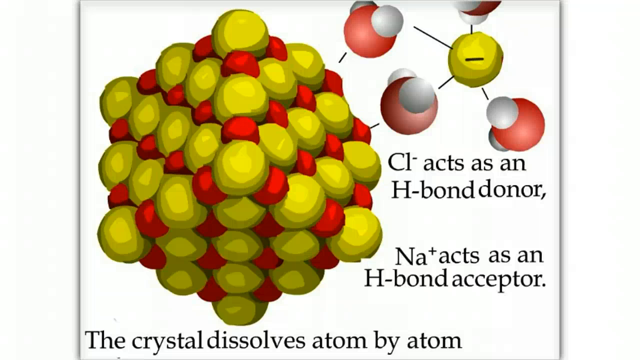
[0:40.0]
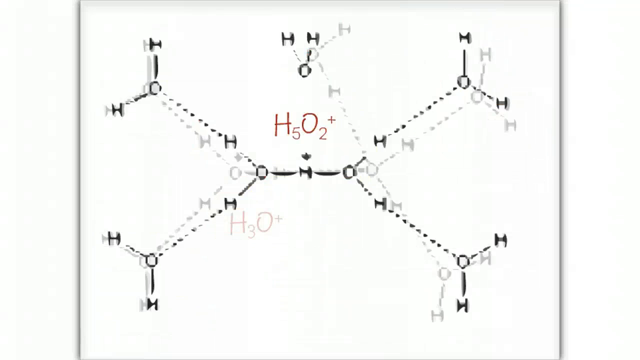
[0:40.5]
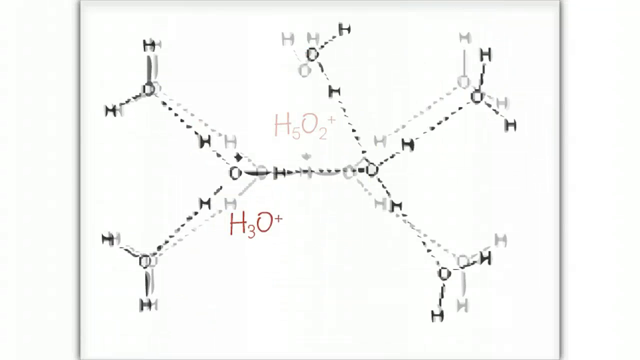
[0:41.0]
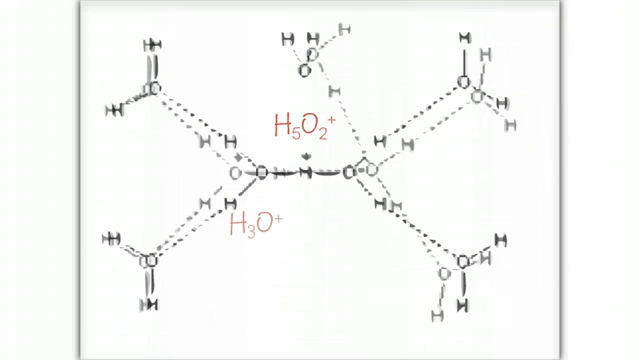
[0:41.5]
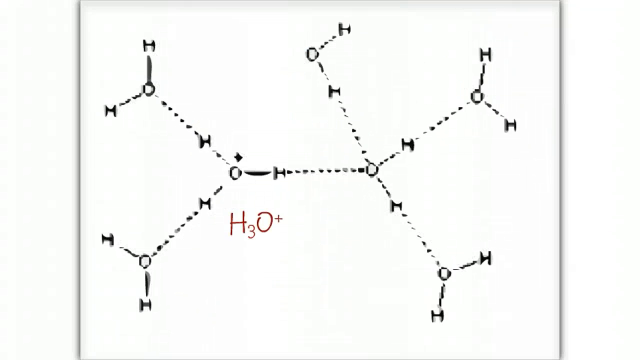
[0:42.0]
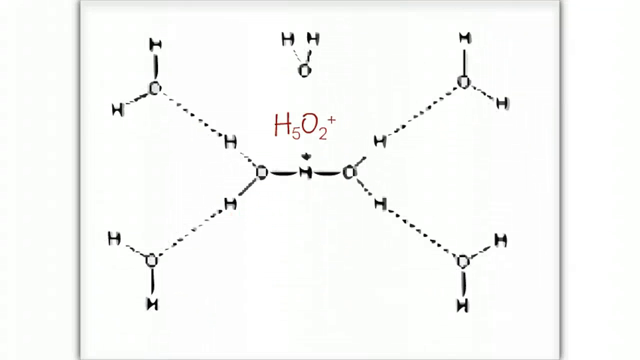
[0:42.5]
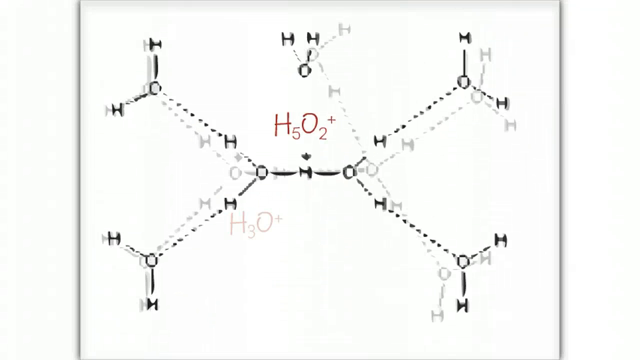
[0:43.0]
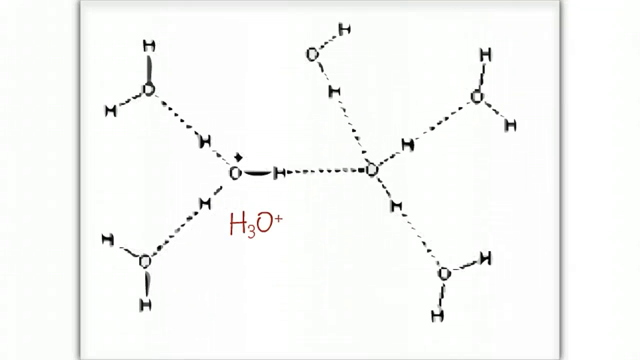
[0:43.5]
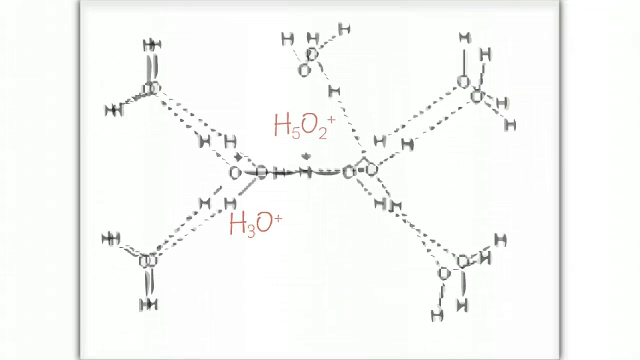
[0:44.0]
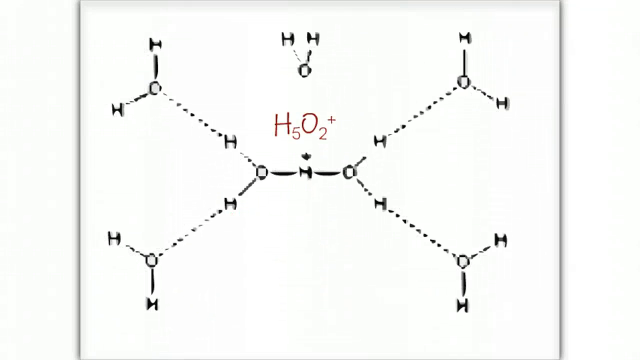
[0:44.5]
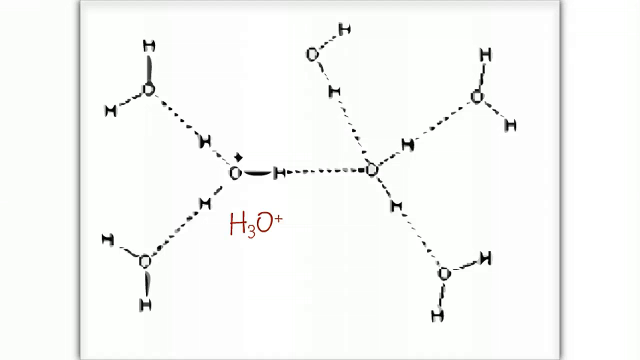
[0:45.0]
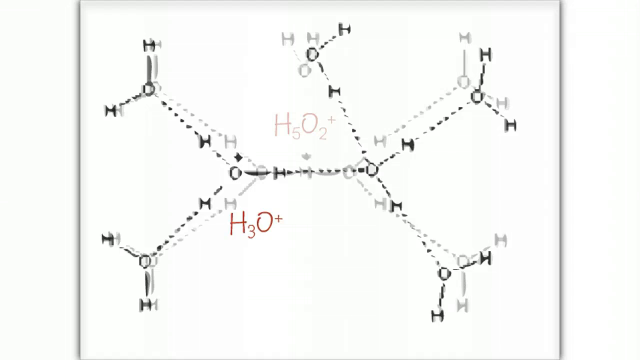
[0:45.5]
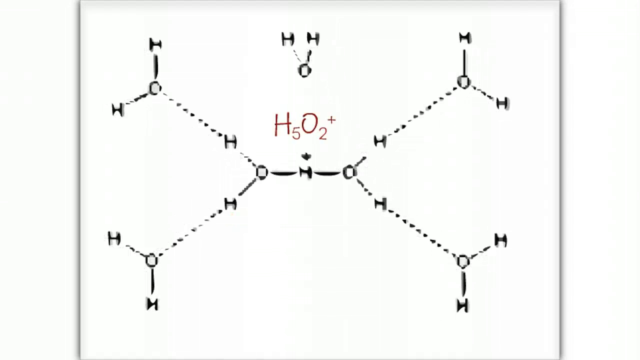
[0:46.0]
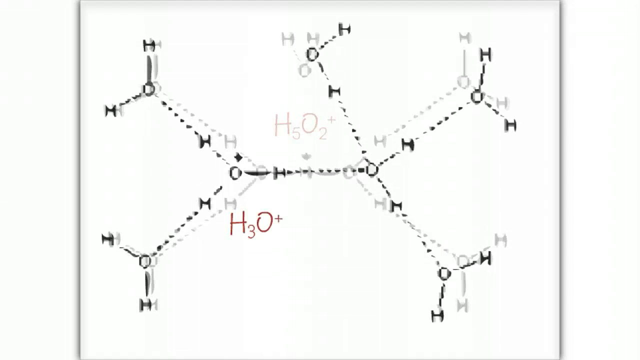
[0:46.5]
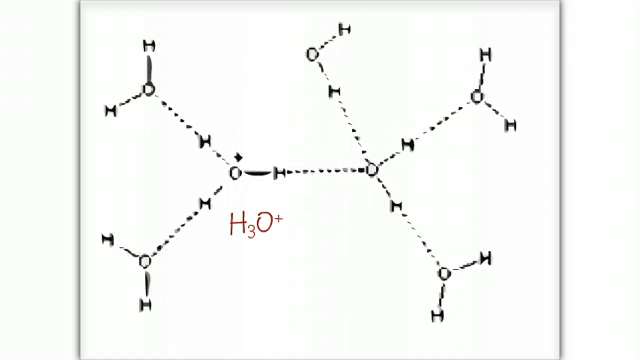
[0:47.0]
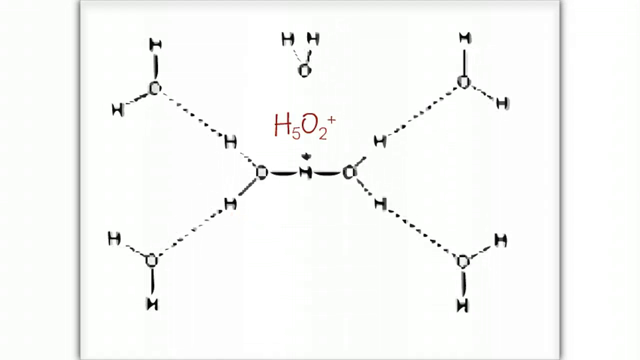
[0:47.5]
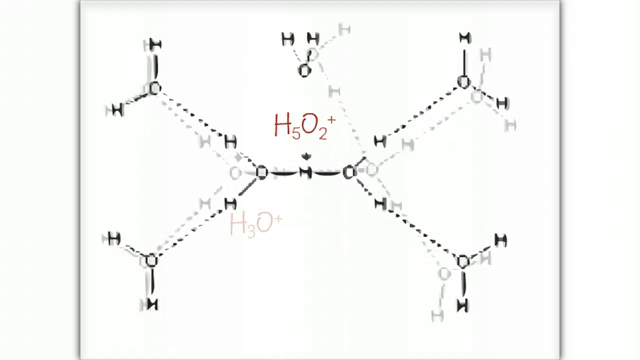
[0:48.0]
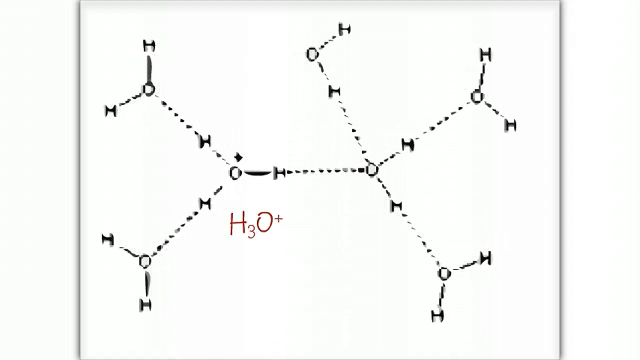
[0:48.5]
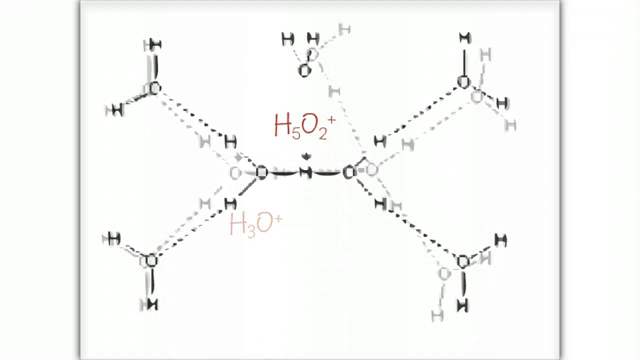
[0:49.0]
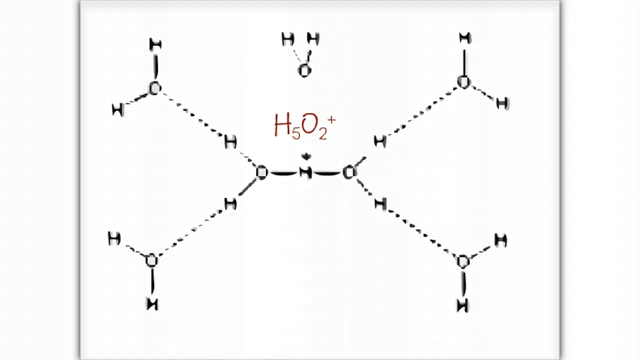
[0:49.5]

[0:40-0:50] The screen continues with different bond diagrams made of letters, lines and dotted lines. The bond diagrams for H5O2 plus and H3O plus cycle back and forth multiple times, showing the differences between the two. The diagrams are drawn in black pen, and the name of each compound is written in purple pen or marker. The diagrams are clearly hand-drawn, judging by the imperfect letters, the dotted lines, and the variation in thickness and shading. The white borders remain visible on the left and right sides of the screen.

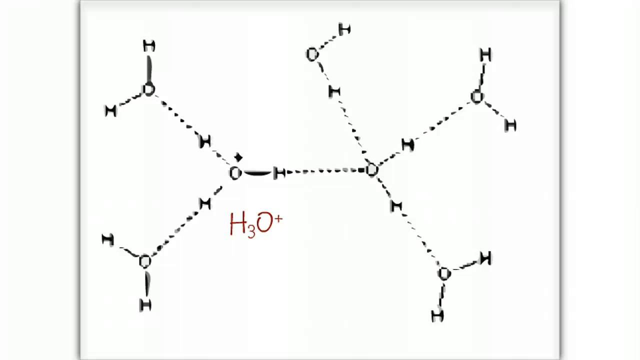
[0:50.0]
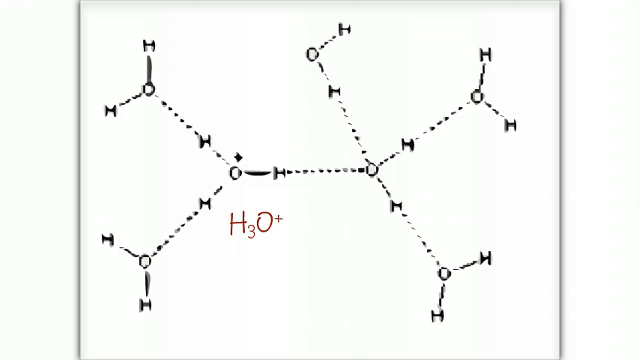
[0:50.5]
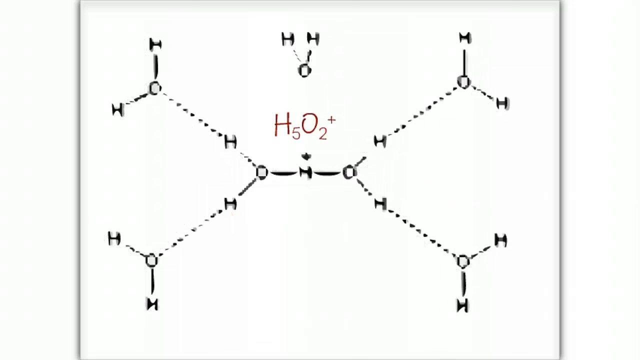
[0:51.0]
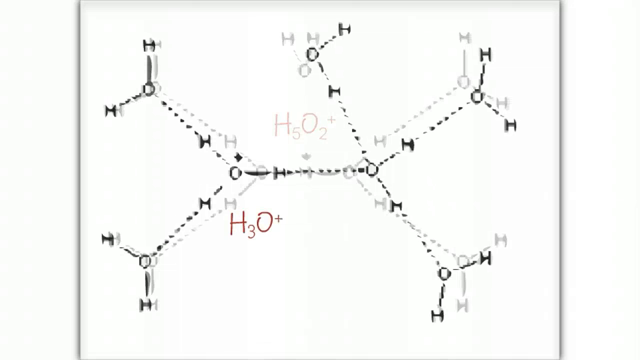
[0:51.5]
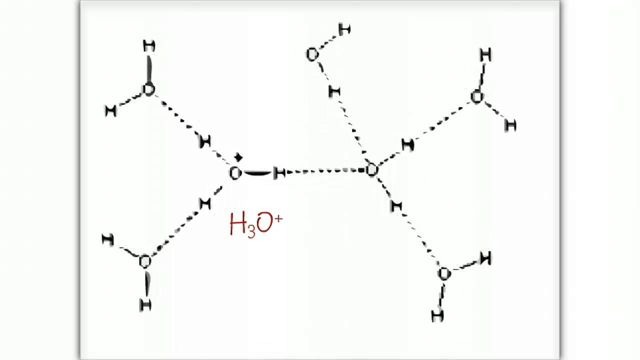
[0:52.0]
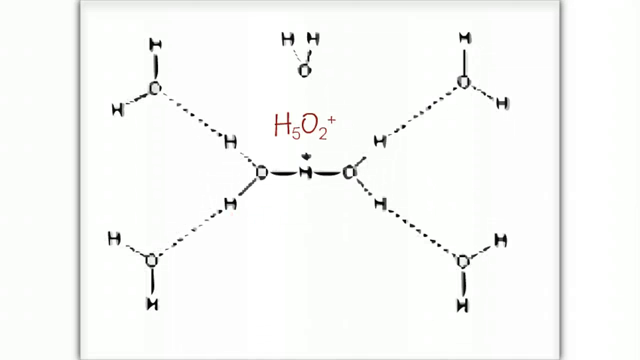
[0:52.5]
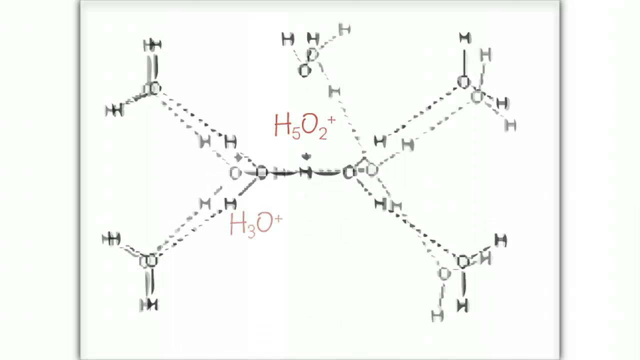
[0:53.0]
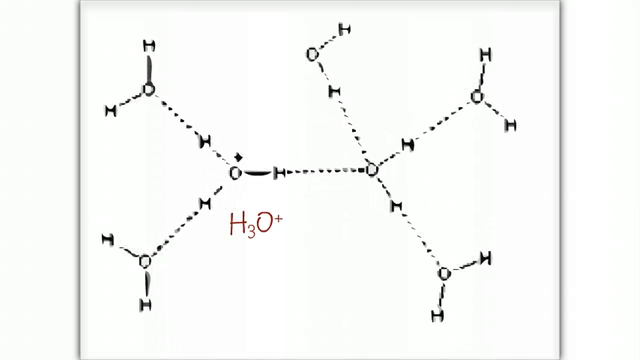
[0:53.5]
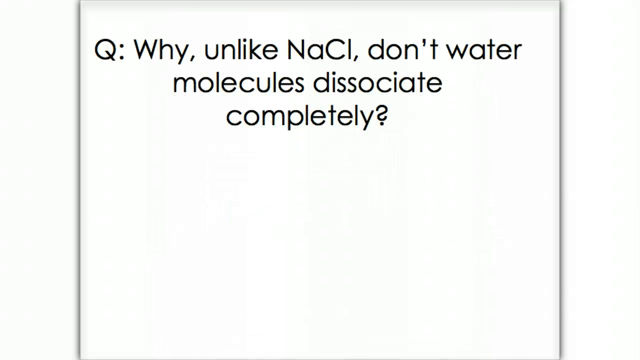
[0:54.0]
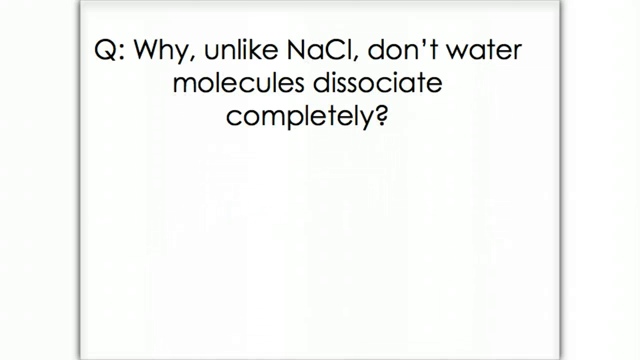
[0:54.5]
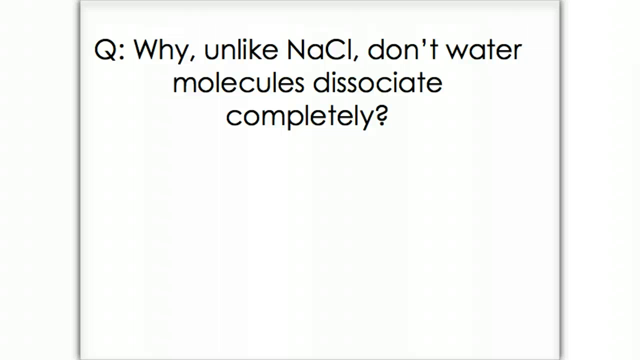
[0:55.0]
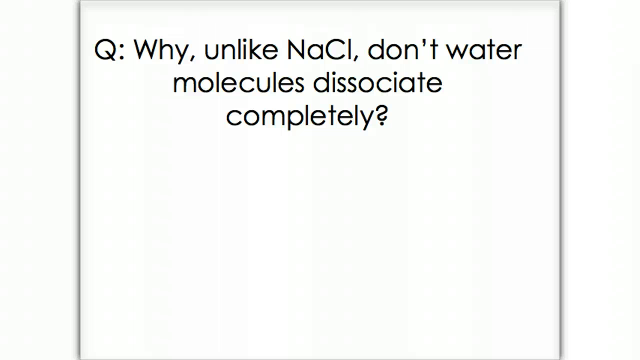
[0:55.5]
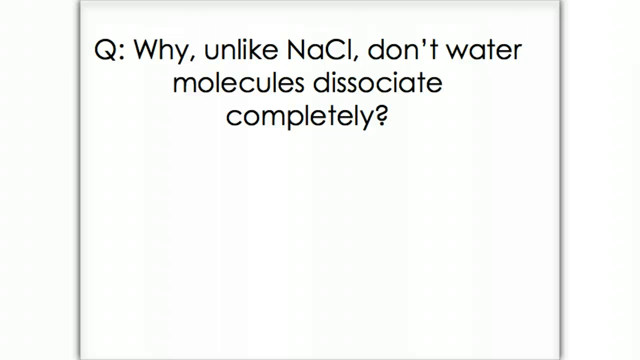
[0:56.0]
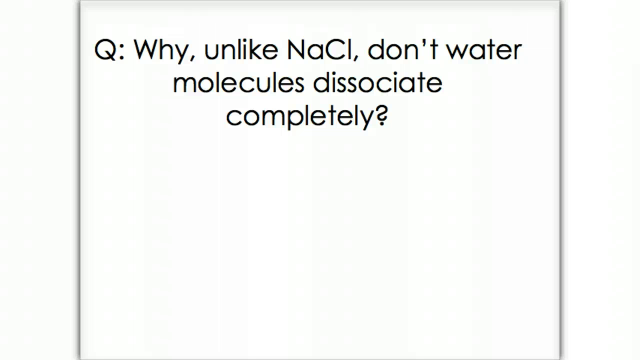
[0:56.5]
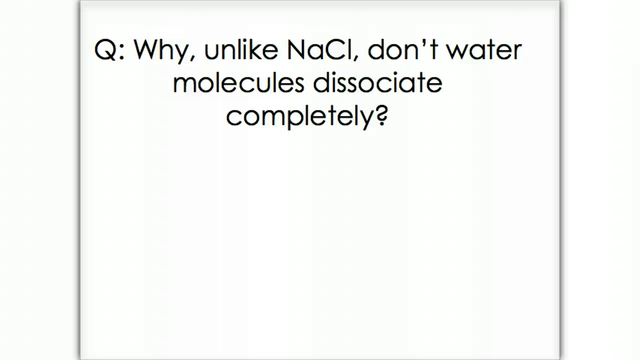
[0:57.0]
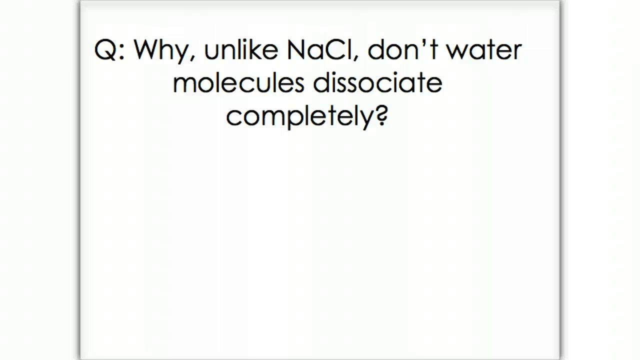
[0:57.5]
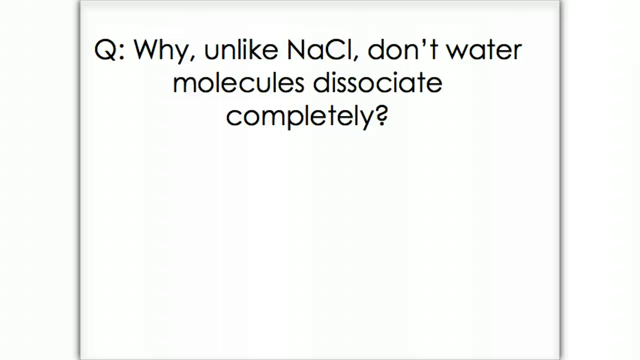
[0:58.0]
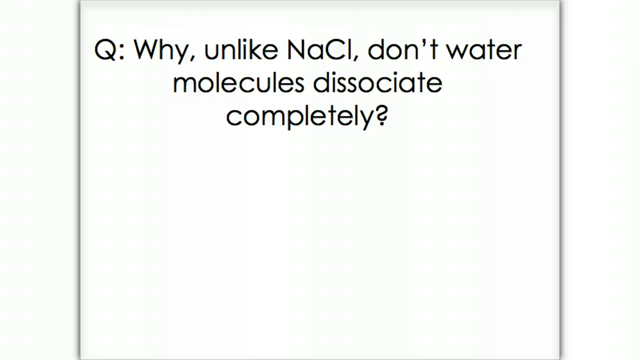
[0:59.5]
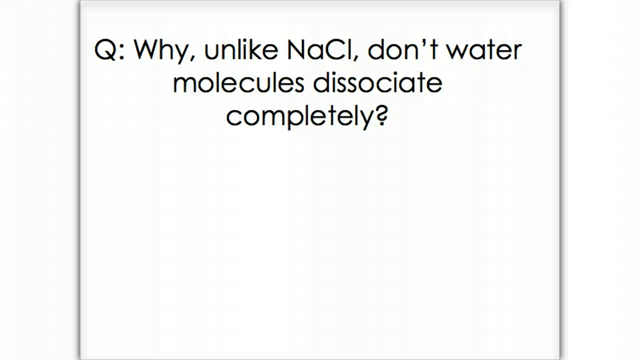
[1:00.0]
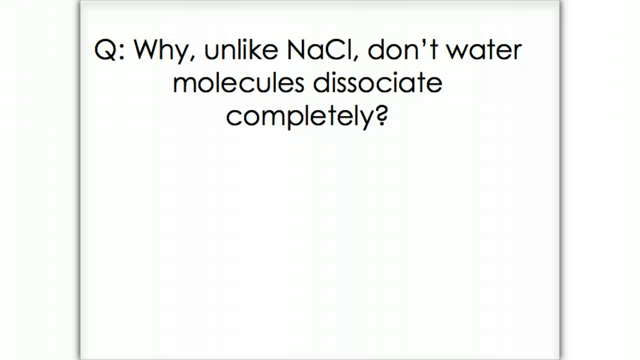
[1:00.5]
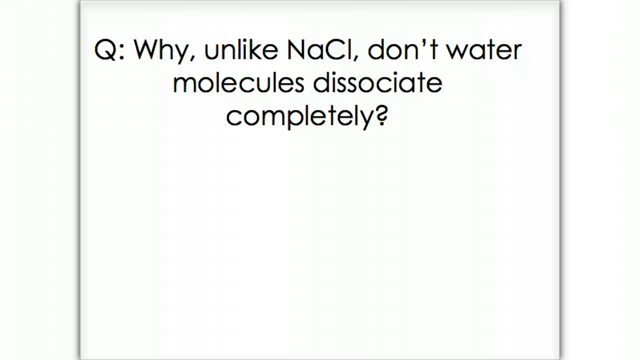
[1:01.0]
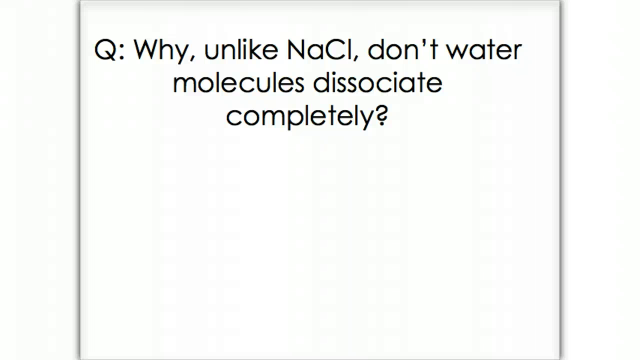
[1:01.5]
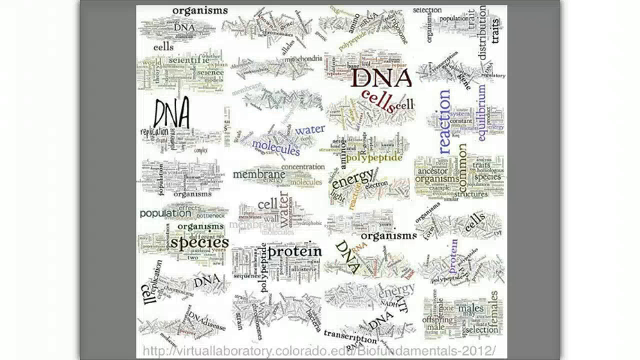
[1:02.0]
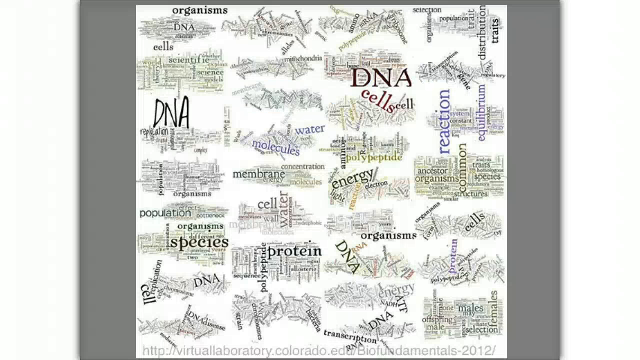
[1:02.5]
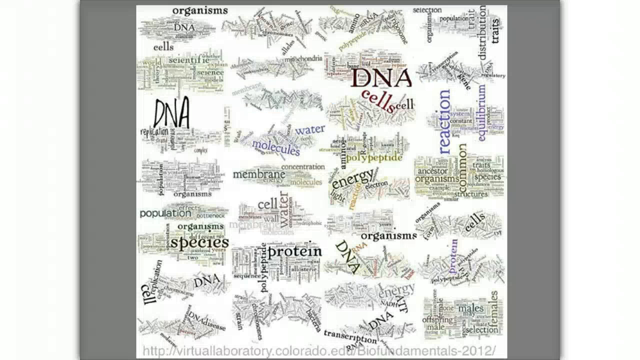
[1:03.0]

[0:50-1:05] The H3O plus and H5O2 plus bond diagrams continue to be shown. A question then appears in black text at the top of the screen, reading "Q. Why, unlike NaCl, don't water molecules dissociate completely?" The screen transitions to an image of many word diagrams positioned on a white square background behind a gray background, with white borders on the left and right sides of the screen. The words include species, protein, population, cell, organisms and DNA, and they are angled in different orientations, in different colors and different fonts. They are arranged in four columns of approximately eight to nine rows, depending on the column, and vary in color from green to purple to blue to red. A slight gray border is visible at the top and bottom of the screen because the word diagrams do not take up the full height of the screen. The video ends abruptly.